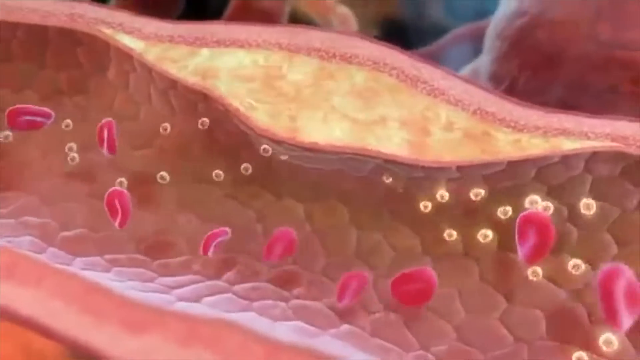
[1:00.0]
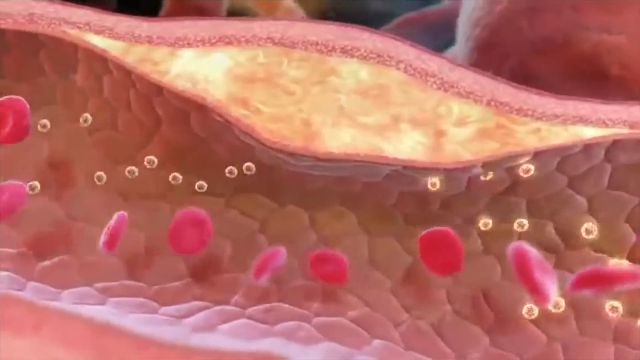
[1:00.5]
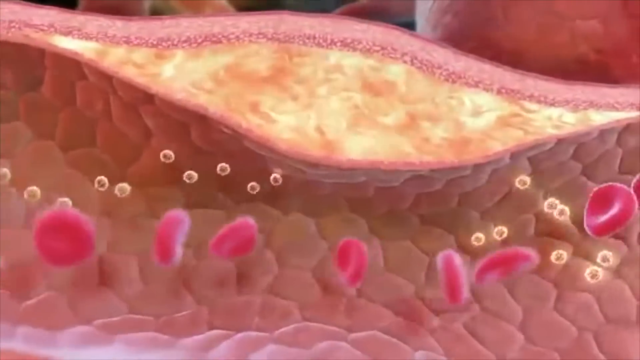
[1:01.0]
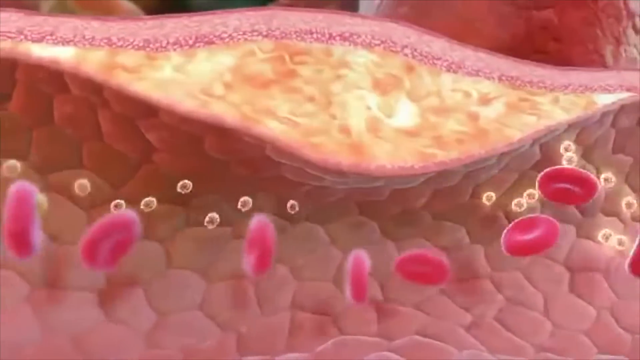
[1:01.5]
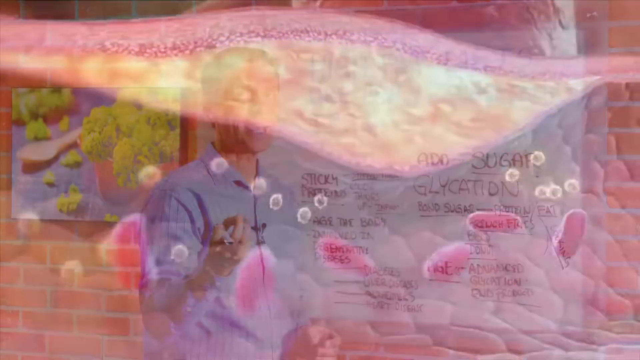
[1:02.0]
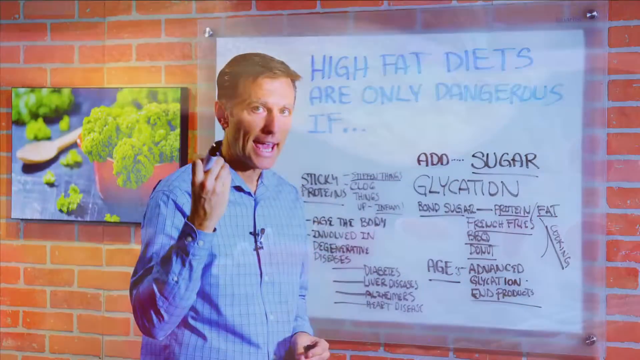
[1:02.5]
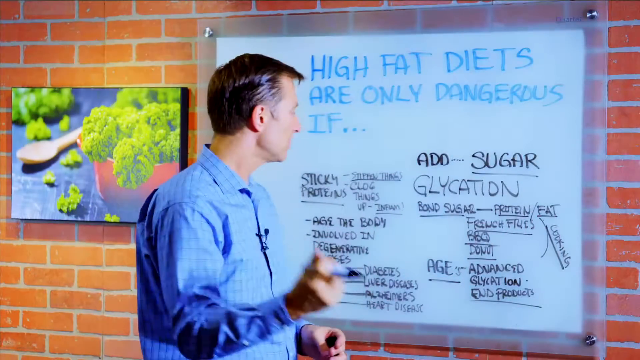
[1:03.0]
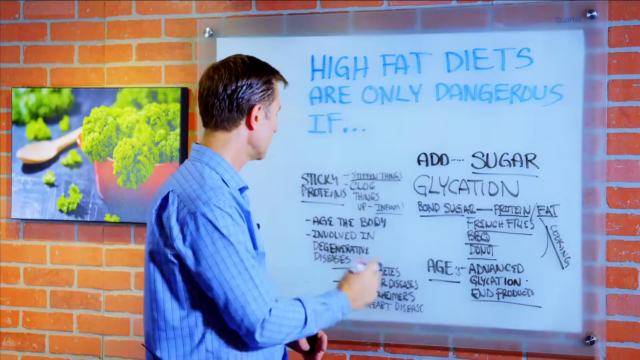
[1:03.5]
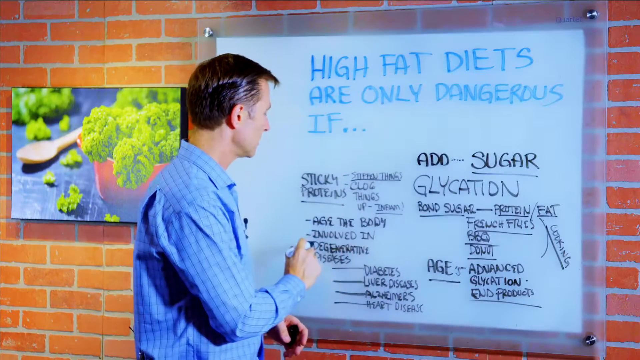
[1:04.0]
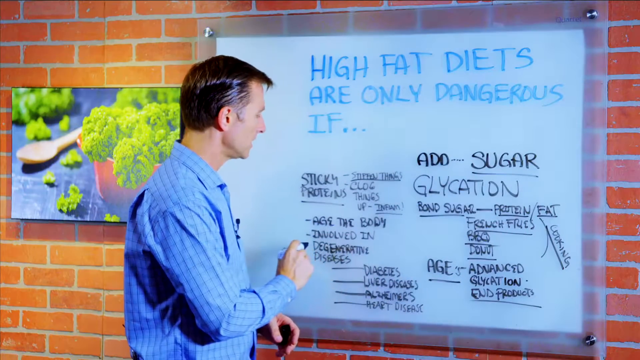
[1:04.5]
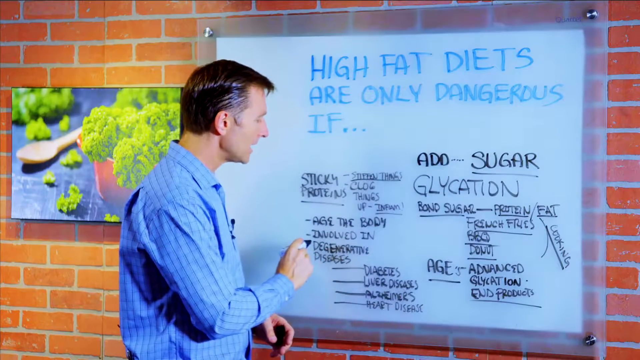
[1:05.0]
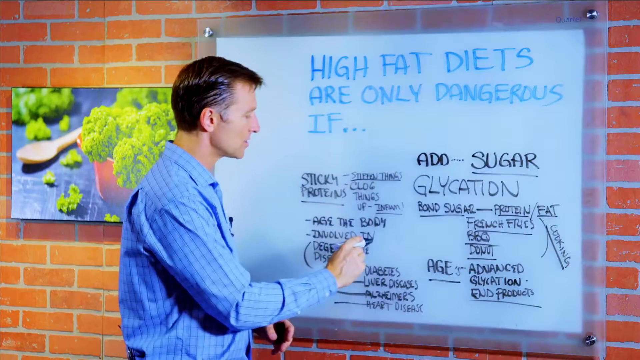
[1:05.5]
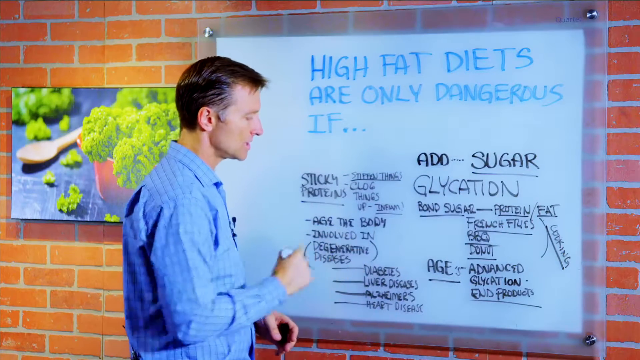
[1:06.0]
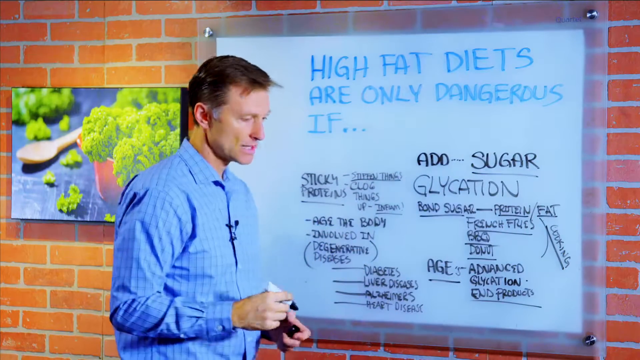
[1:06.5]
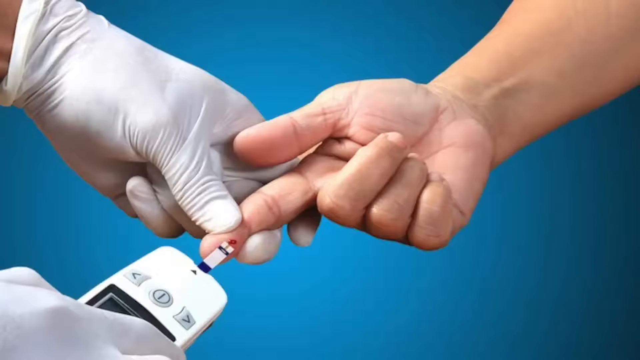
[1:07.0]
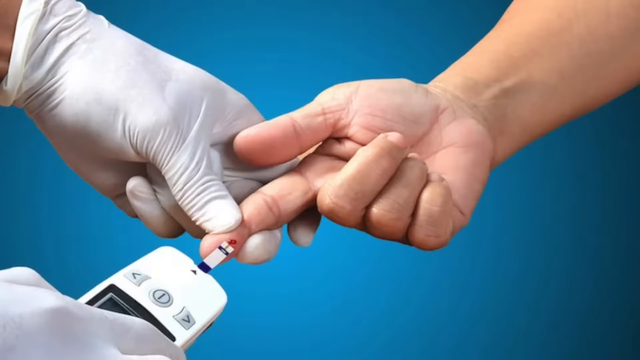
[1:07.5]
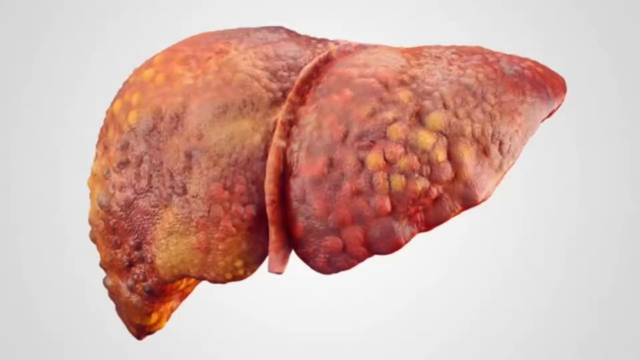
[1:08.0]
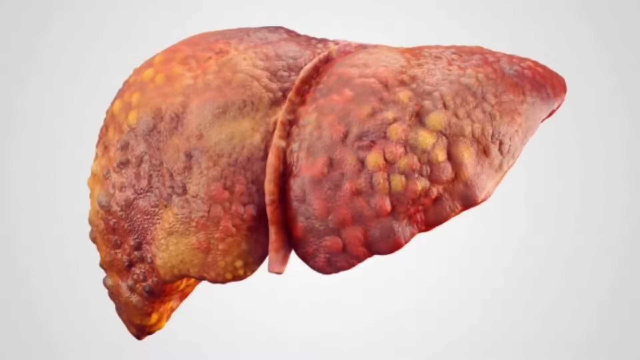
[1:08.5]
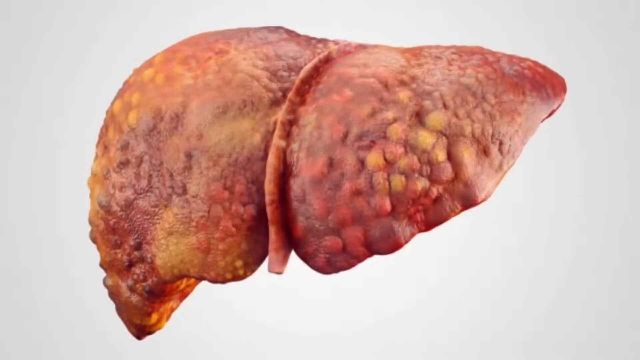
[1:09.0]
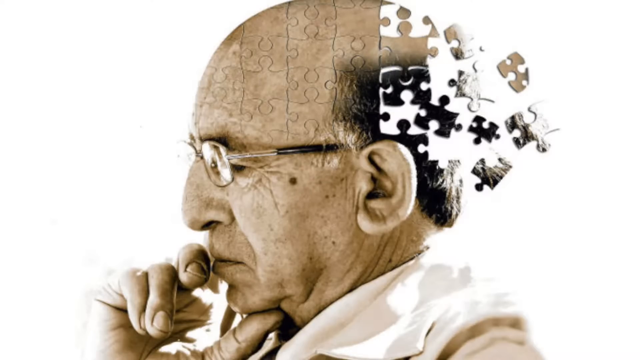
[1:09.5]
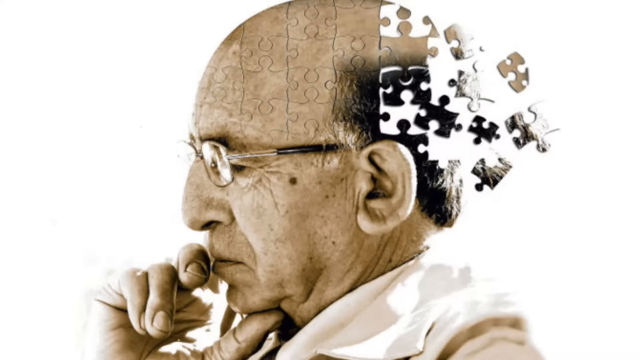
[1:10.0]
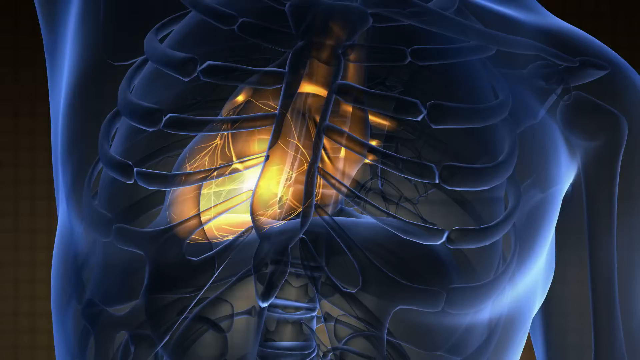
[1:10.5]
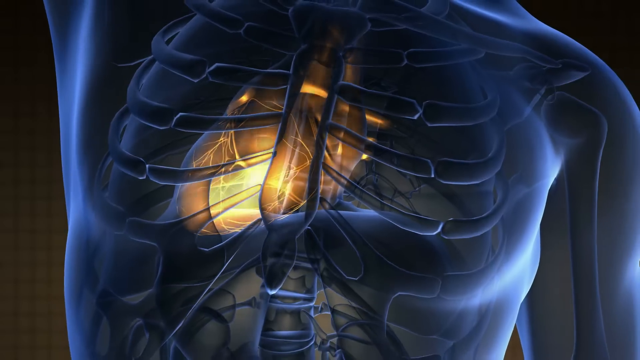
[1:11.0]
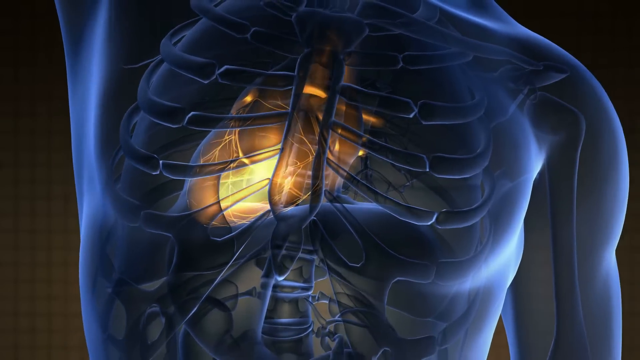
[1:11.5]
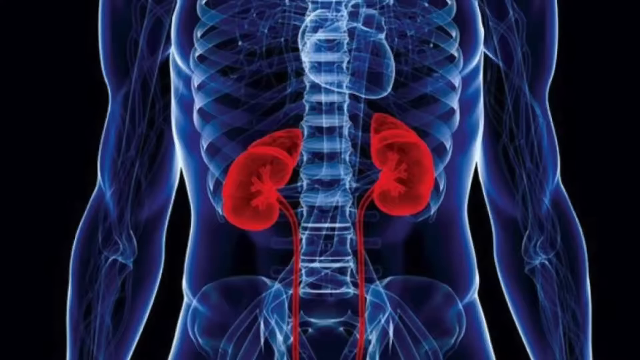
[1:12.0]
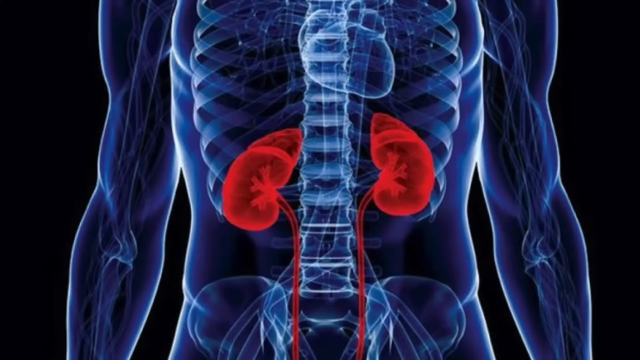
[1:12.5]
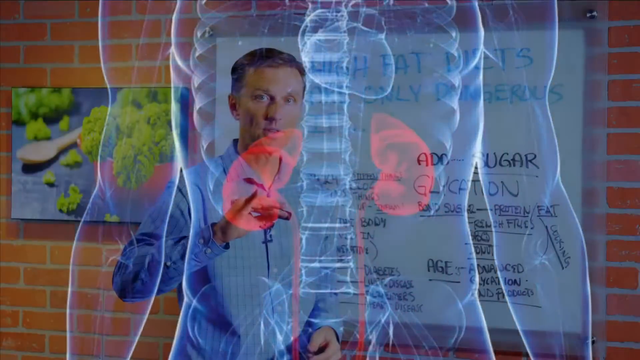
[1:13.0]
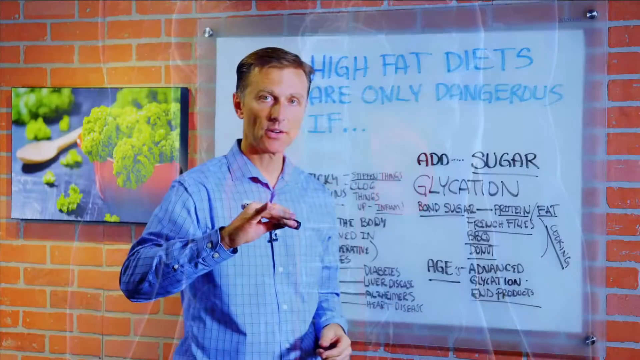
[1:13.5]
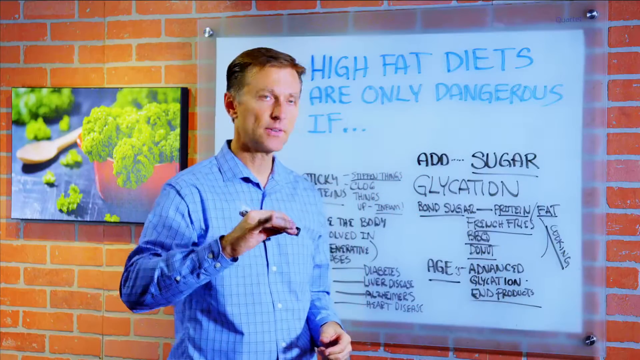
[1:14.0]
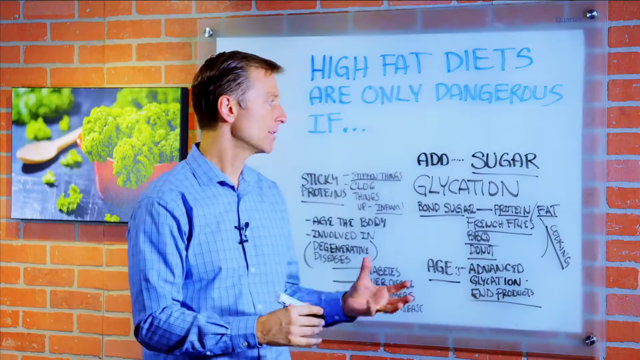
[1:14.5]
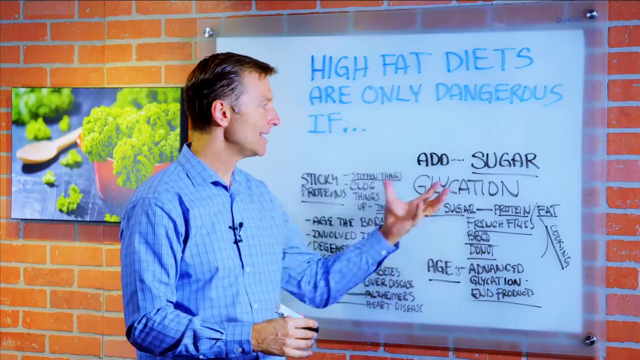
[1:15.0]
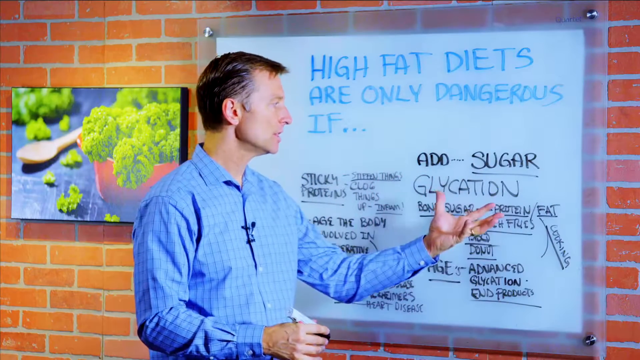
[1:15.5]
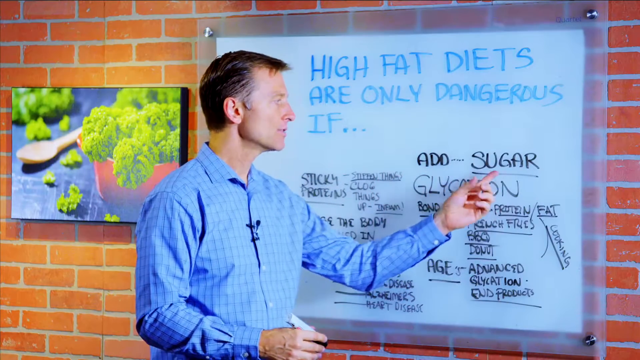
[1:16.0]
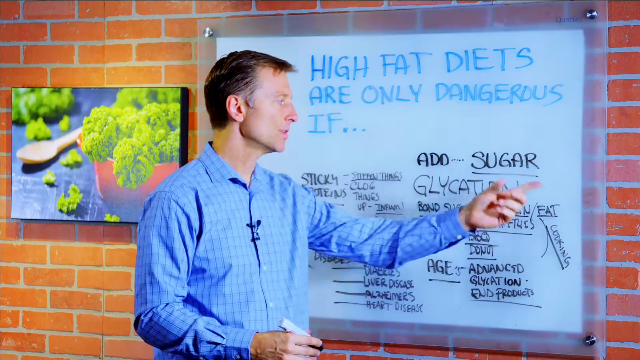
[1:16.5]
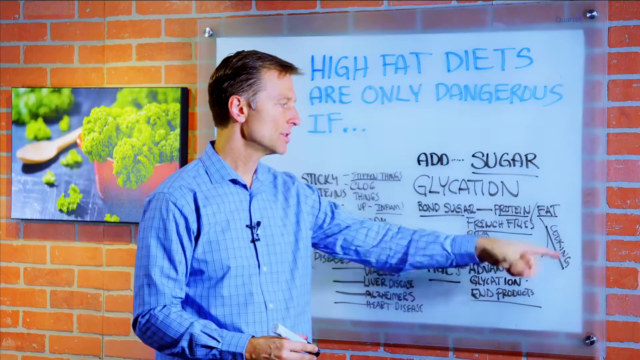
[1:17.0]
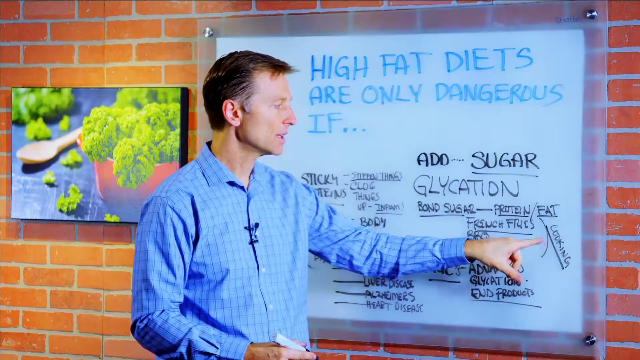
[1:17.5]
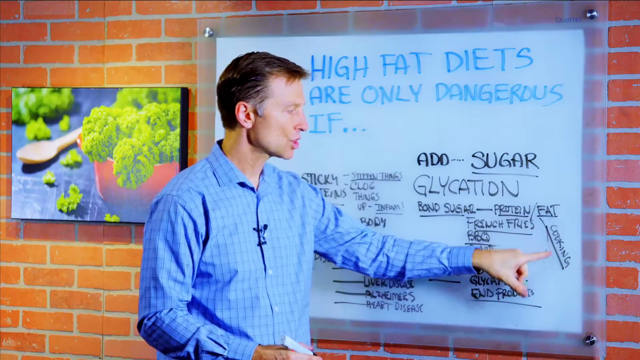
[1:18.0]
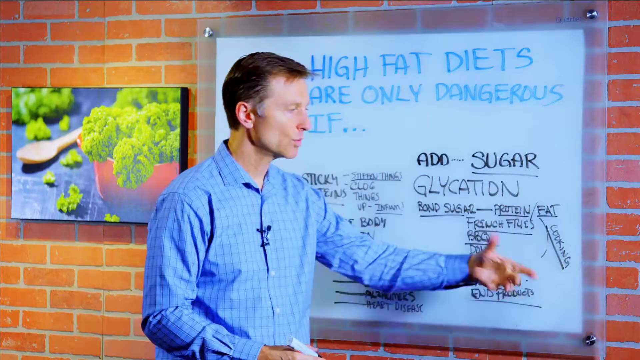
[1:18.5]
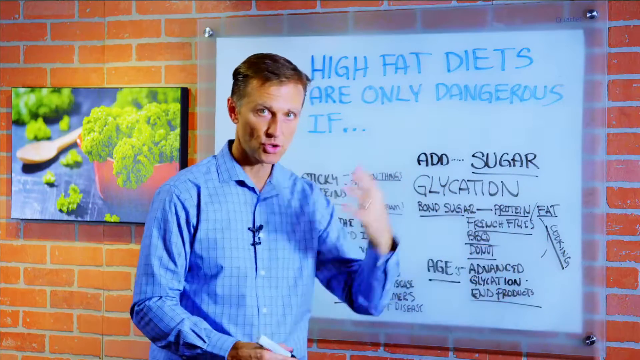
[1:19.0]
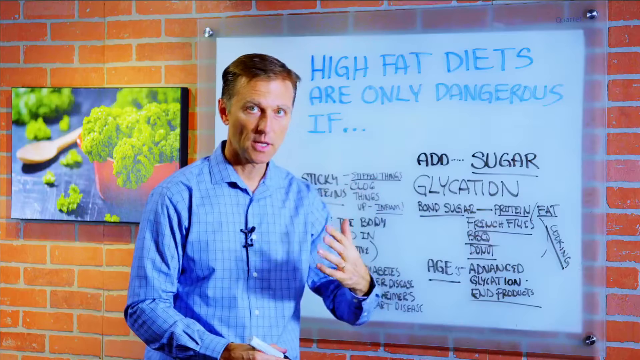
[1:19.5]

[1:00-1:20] Human skin is shown, with some fat in the lower part of the skin.